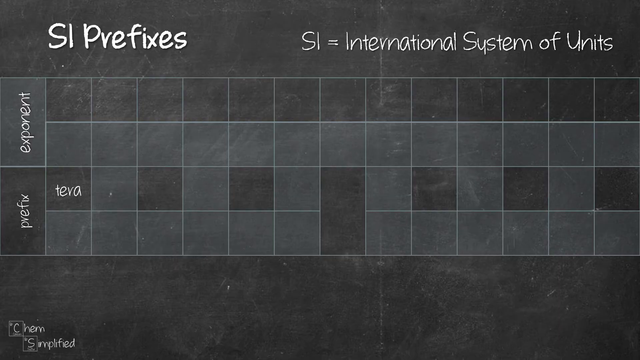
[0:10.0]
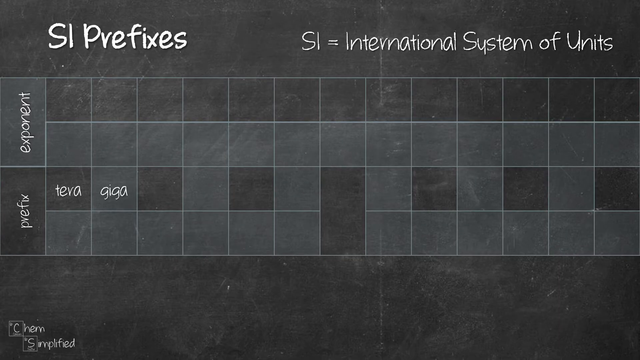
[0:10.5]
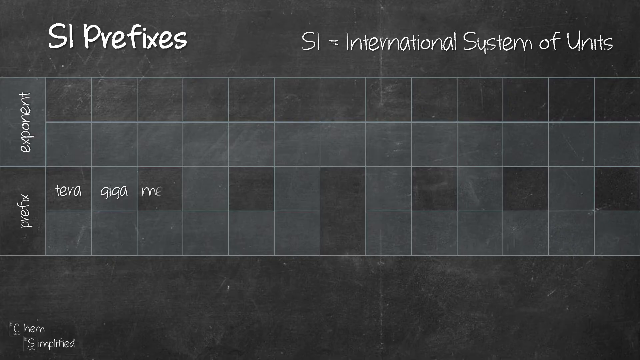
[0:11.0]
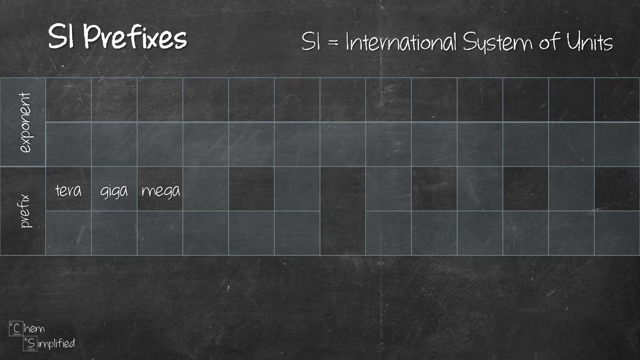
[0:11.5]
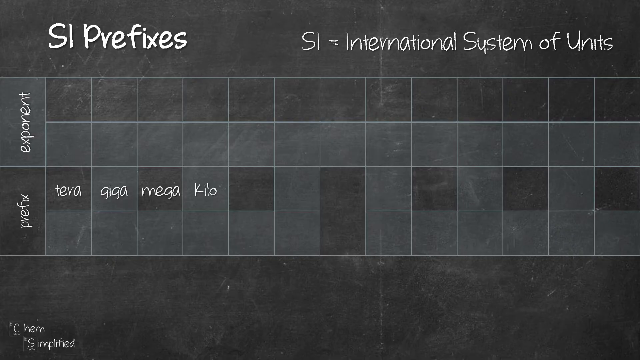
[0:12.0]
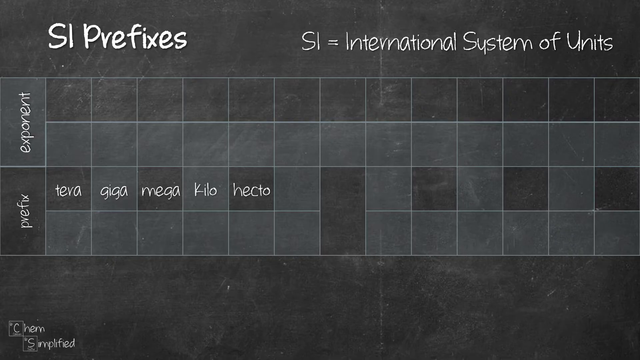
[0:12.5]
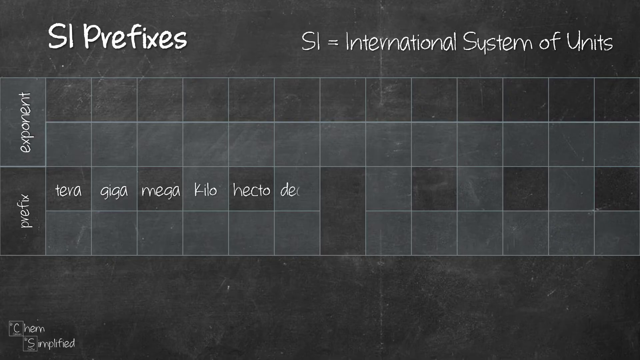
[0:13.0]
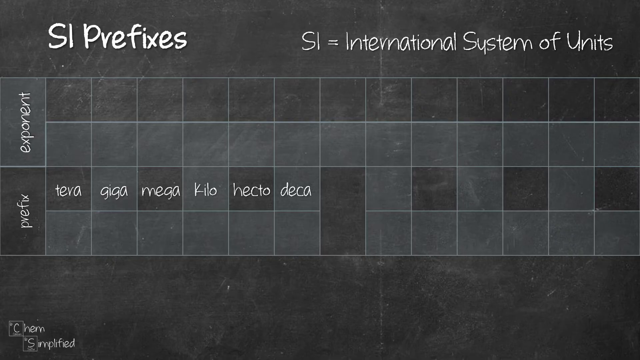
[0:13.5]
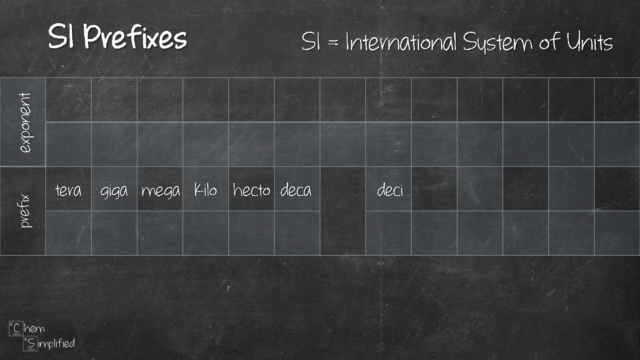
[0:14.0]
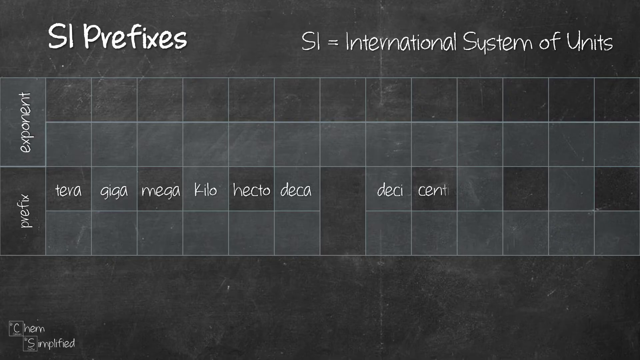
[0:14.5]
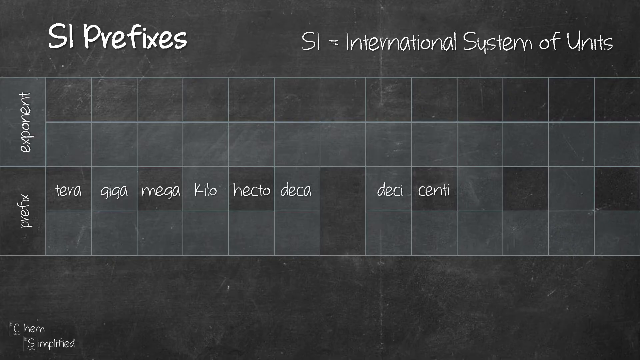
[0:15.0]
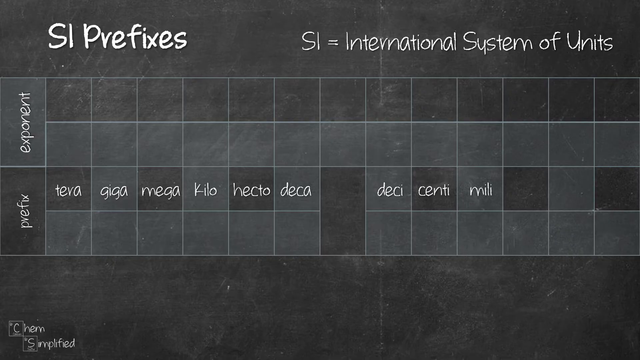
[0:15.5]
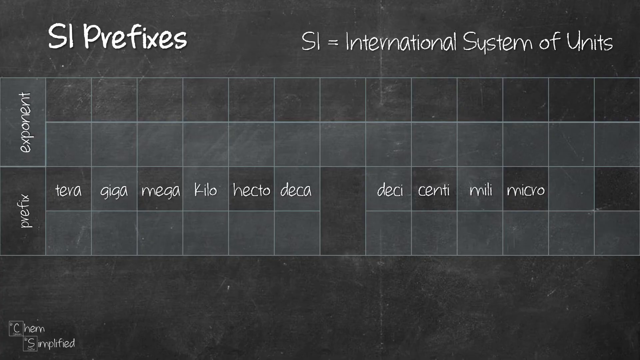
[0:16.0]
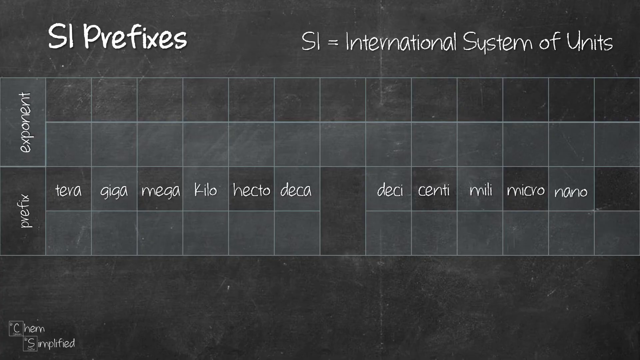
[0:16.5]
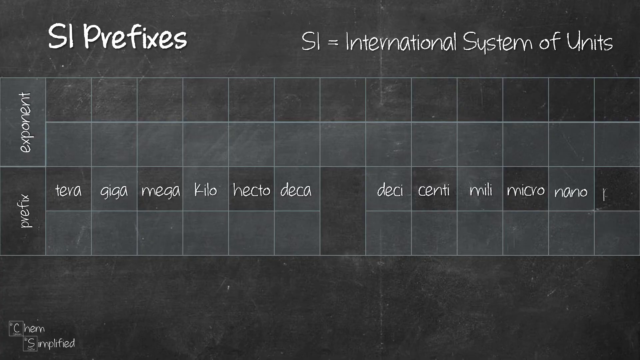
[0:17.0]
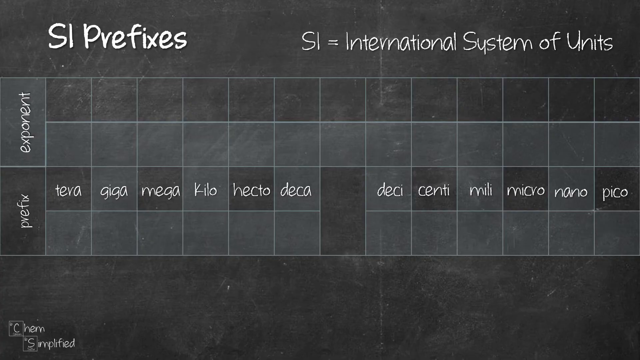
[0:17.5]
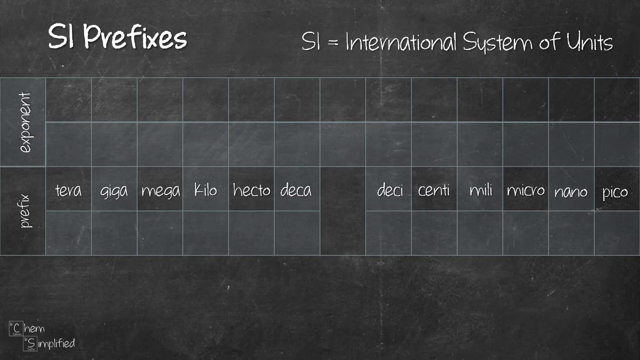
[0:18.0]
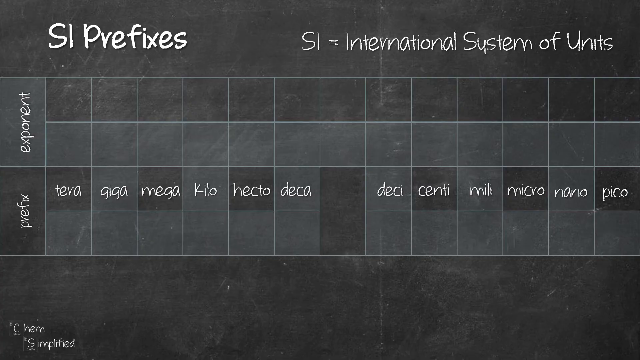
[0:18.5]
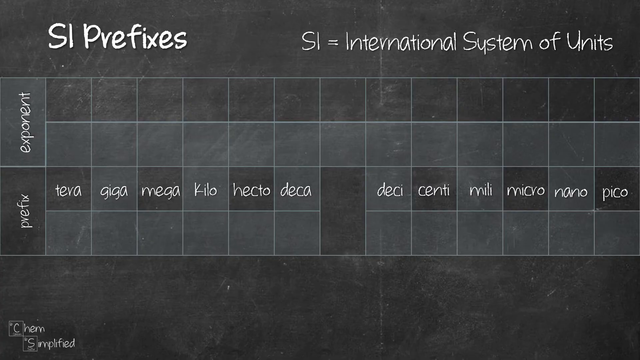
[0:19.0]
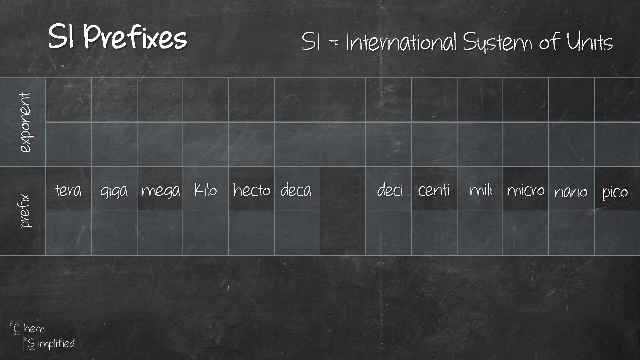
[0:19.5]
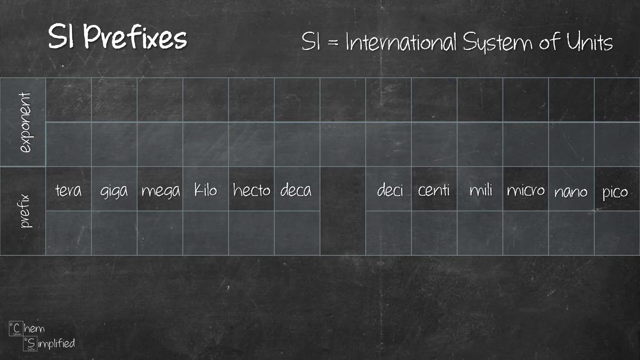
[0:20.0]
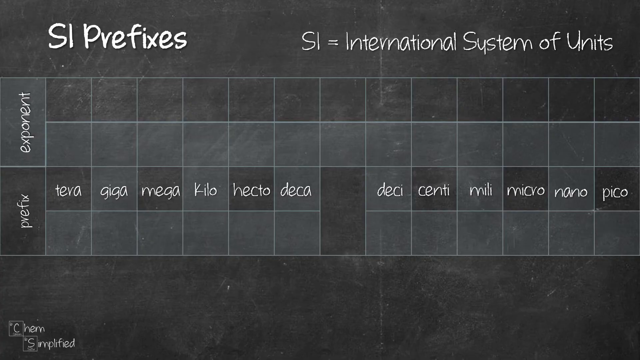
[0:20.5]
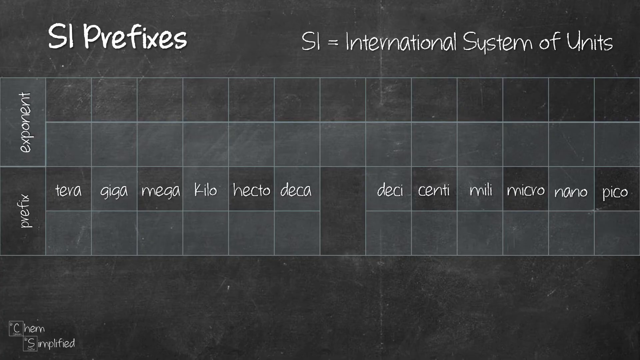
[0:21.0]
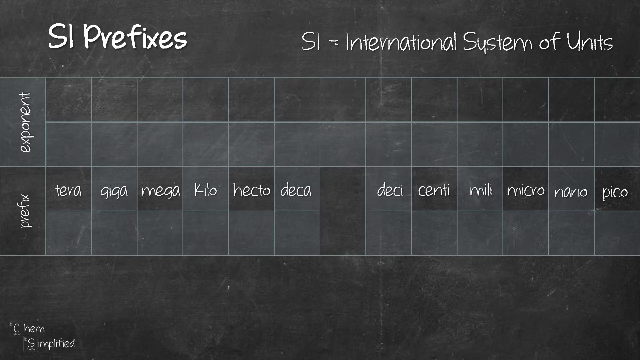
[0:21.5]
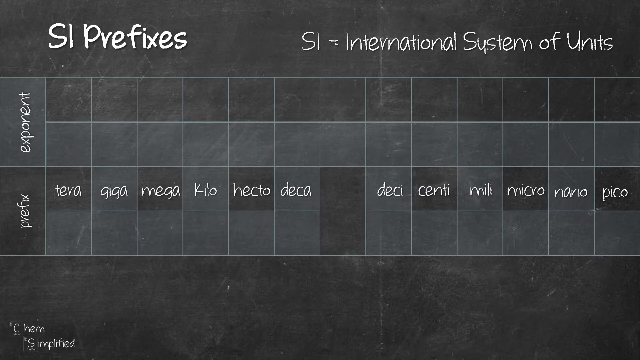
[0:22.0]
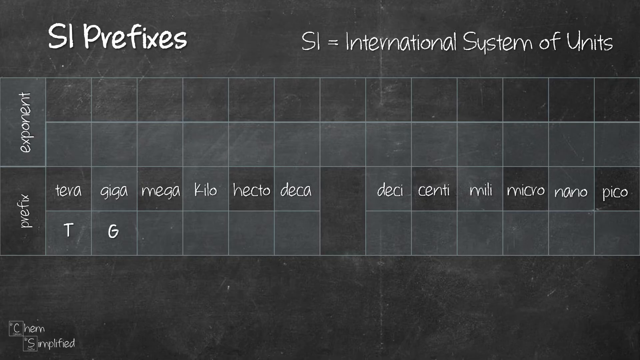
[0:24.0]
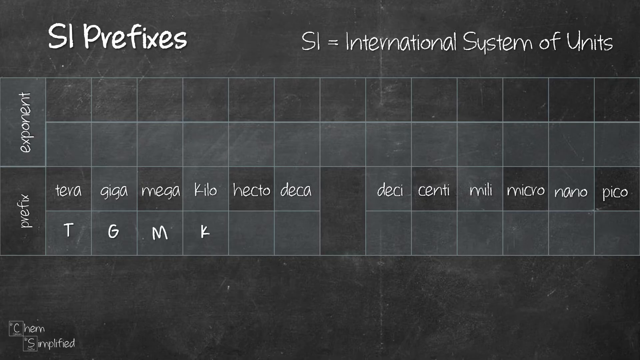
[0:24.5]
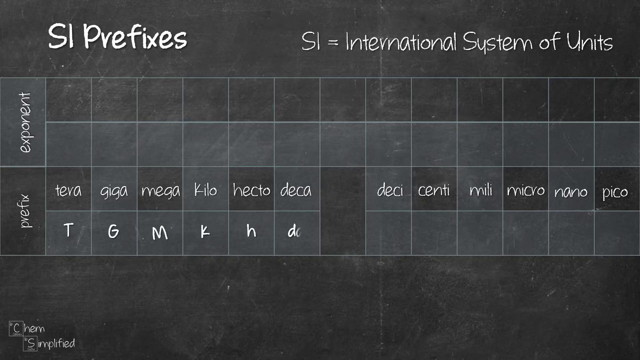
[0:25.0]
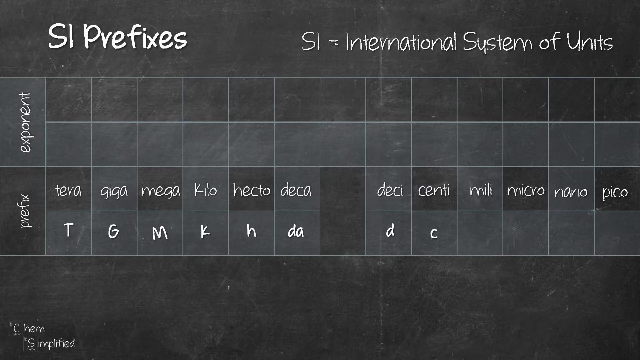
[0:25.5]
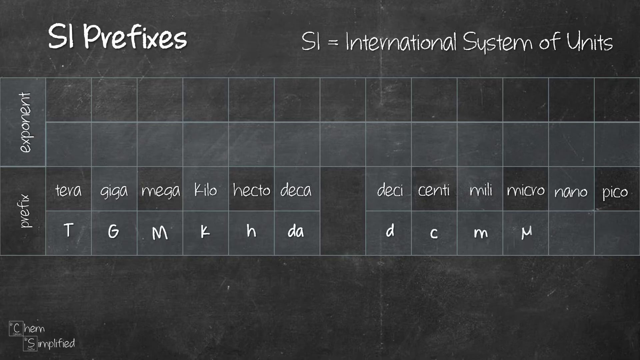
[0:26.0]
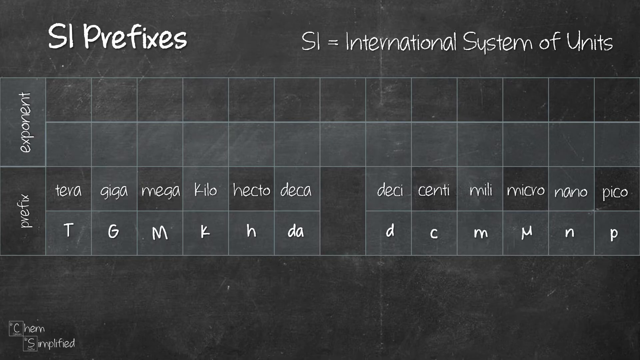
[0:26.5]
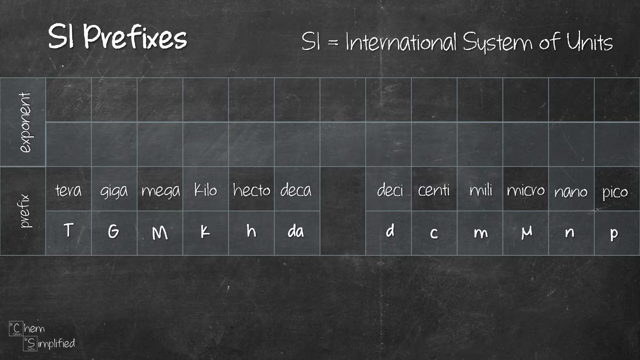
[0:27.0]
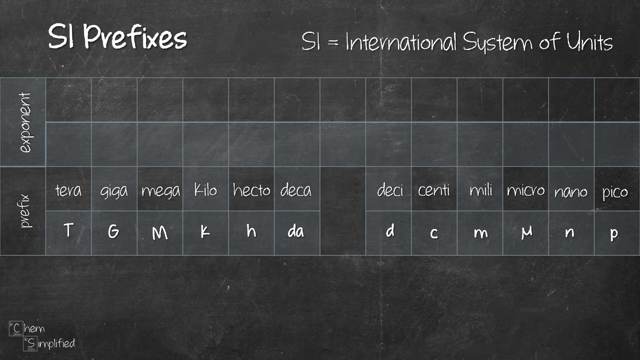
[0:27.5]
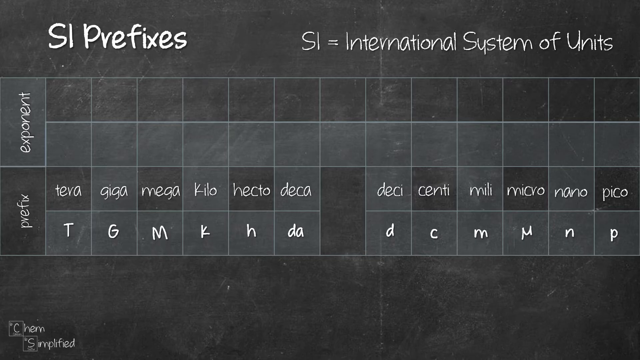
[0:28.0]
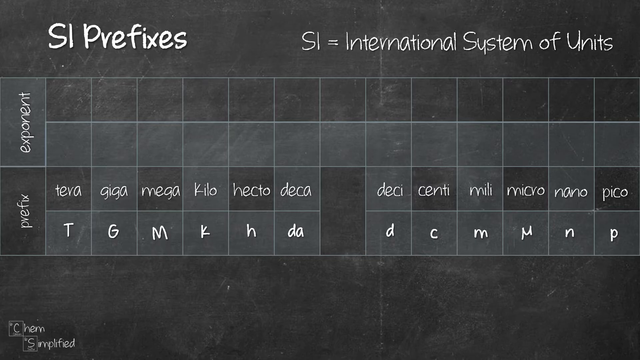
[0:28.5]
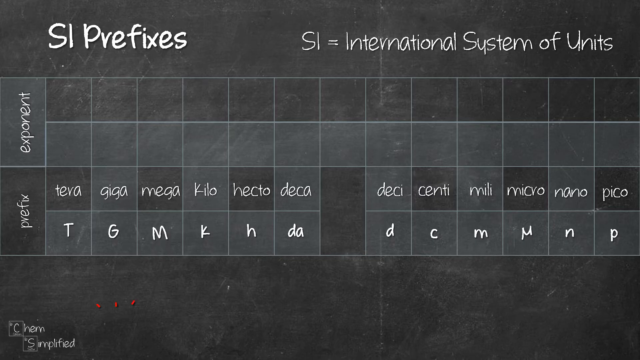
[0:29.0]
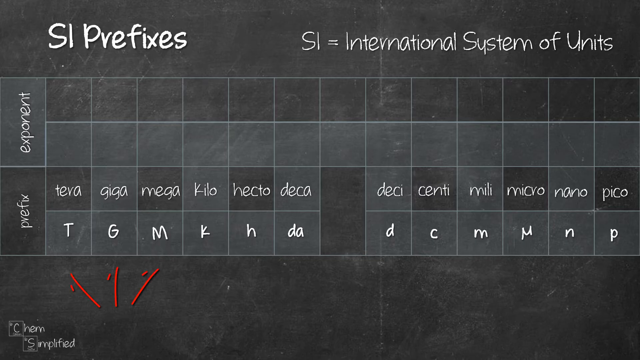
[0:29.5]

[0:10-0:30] The screen has a chalkboard-style background. On the left-hand side it reads "SI prefixes", and at the very top on the right-hand side it reads "SI = international systems of unit". Below that is a grid system with two connected levels: the top is labeled "exponents" and the bottom "prefixes". The grid's boxes list the prefixes tera, giga, mega, kilo, hecto and deca. In the center after deca there is no entry, just an empty box. The list then continues with deci, centi, milli, micro, nano and pico. The grid below those words then fills in with abbreviations in a bold font: uppercase T, G, M, K and H, then lowercase da, d, c and m, a Greek letter like a U, an N and a P.